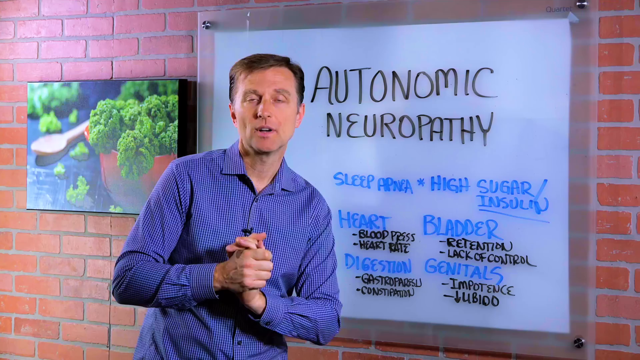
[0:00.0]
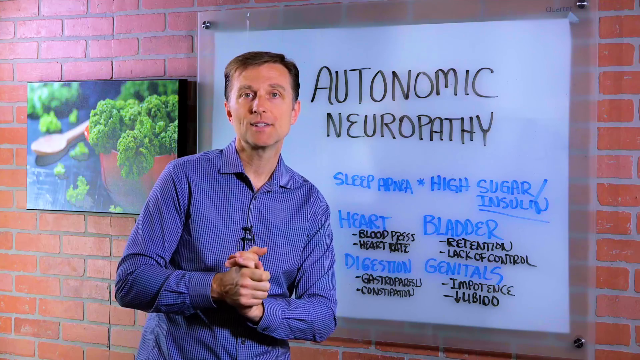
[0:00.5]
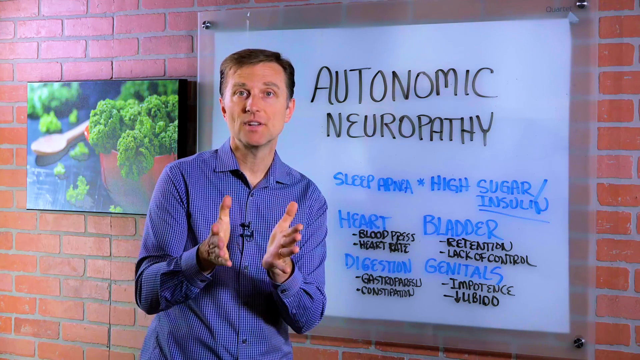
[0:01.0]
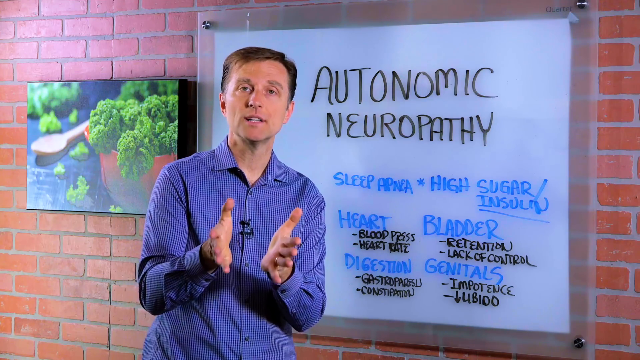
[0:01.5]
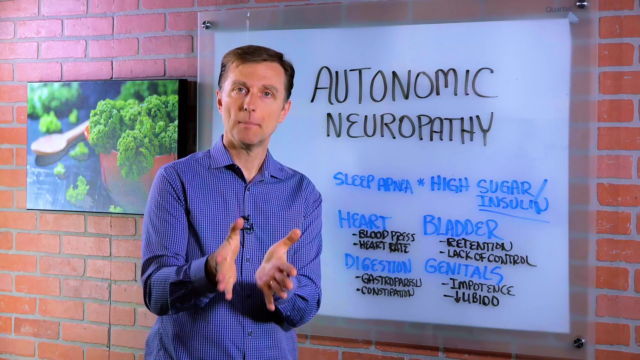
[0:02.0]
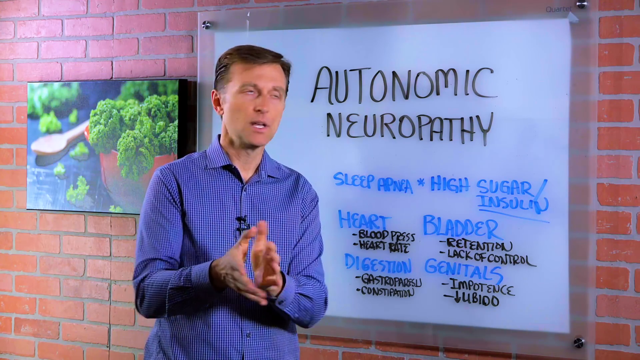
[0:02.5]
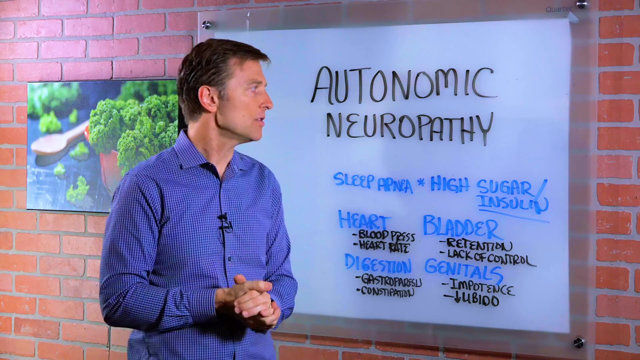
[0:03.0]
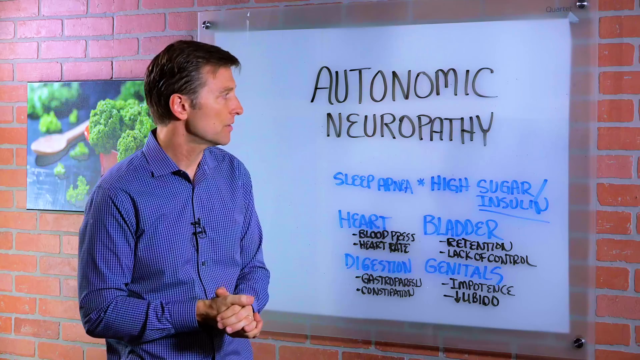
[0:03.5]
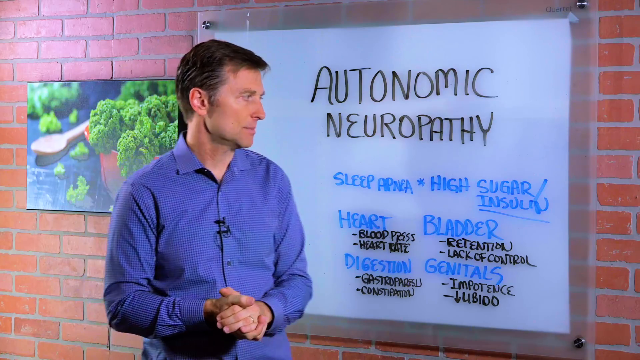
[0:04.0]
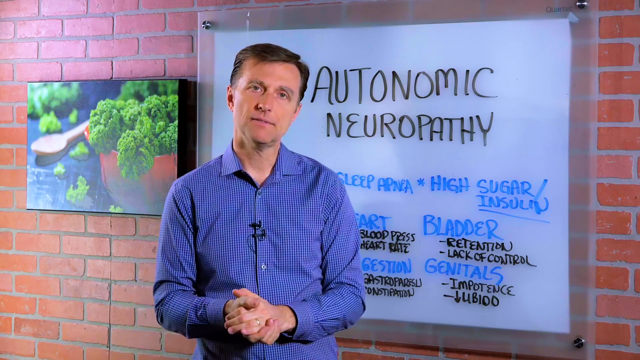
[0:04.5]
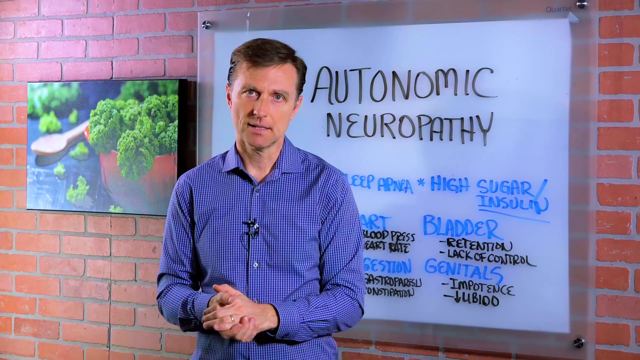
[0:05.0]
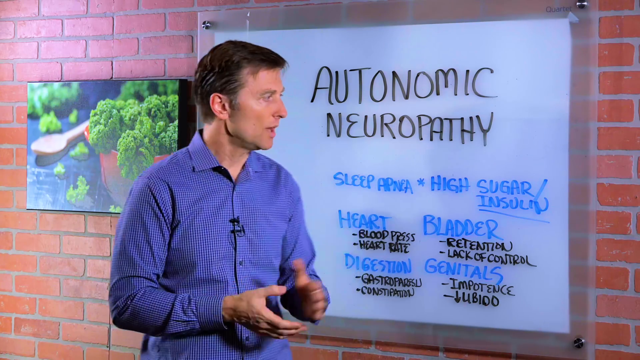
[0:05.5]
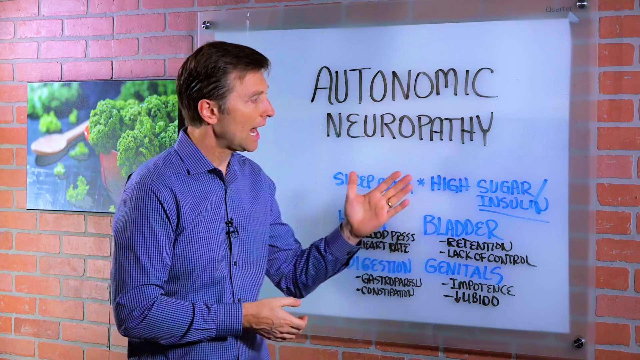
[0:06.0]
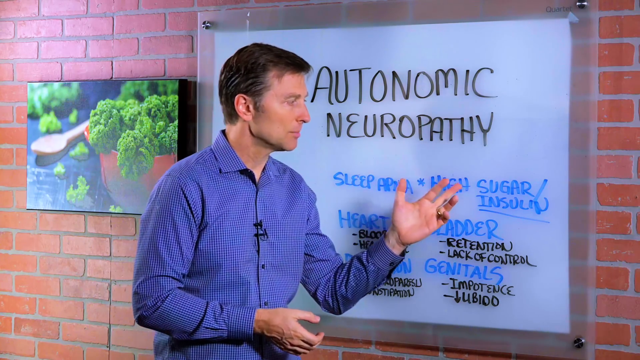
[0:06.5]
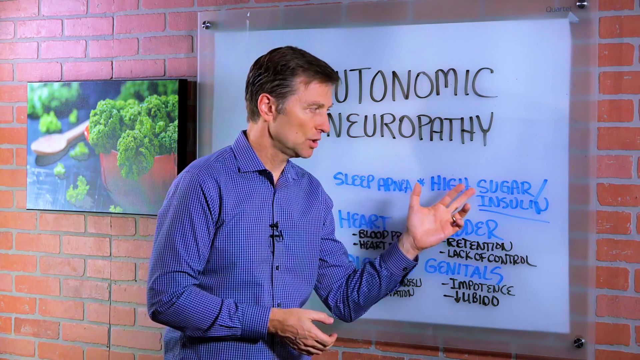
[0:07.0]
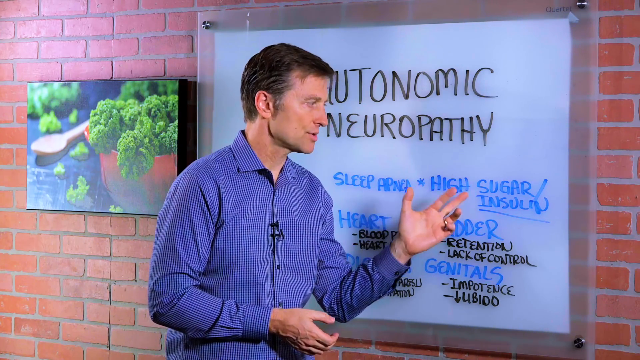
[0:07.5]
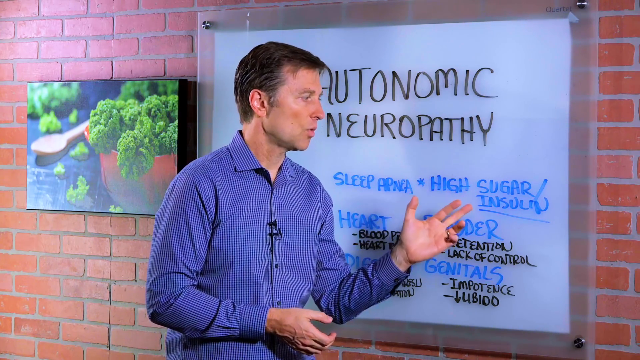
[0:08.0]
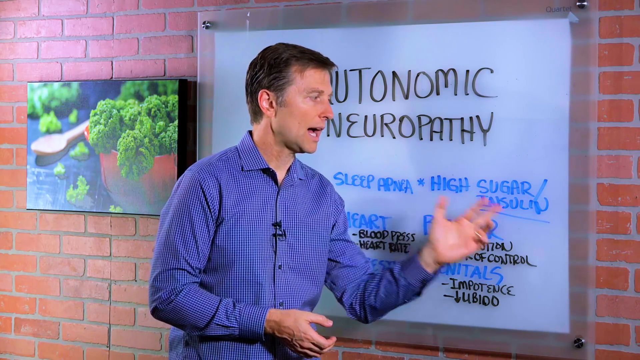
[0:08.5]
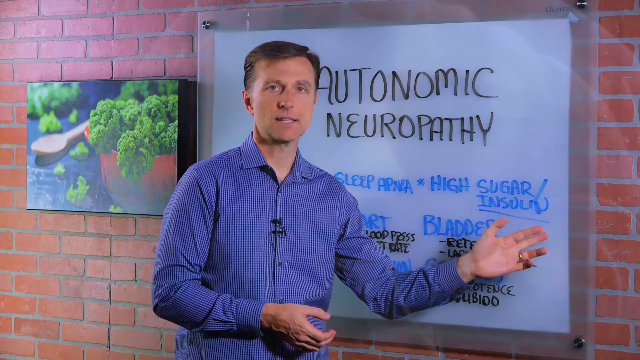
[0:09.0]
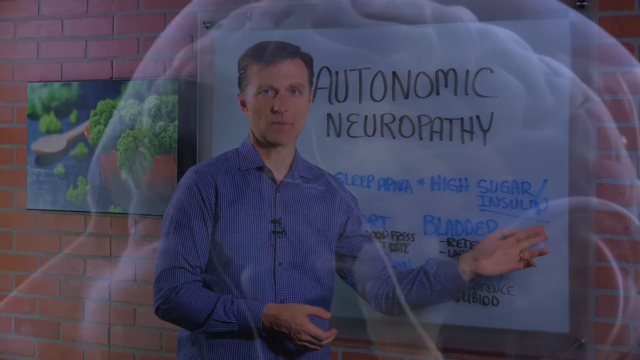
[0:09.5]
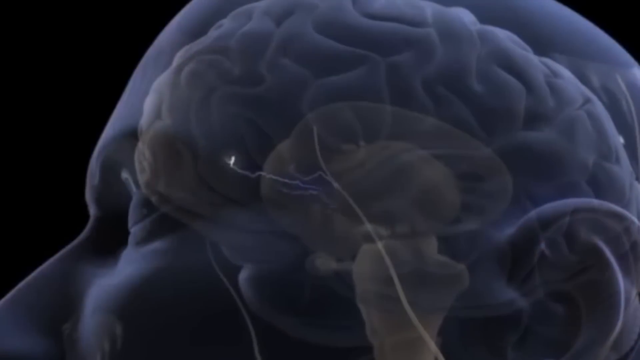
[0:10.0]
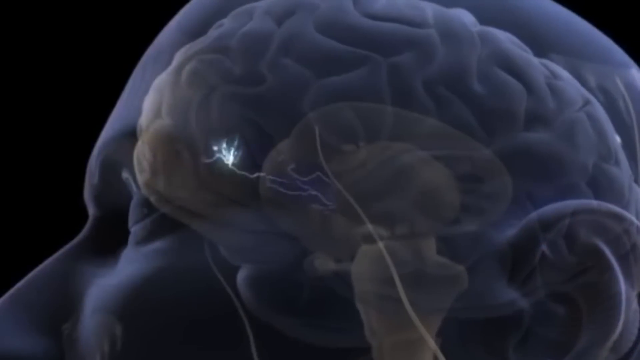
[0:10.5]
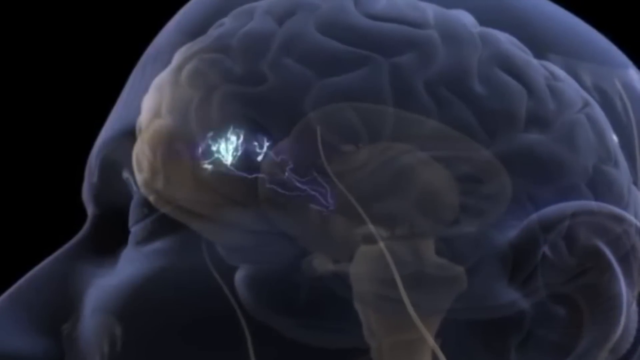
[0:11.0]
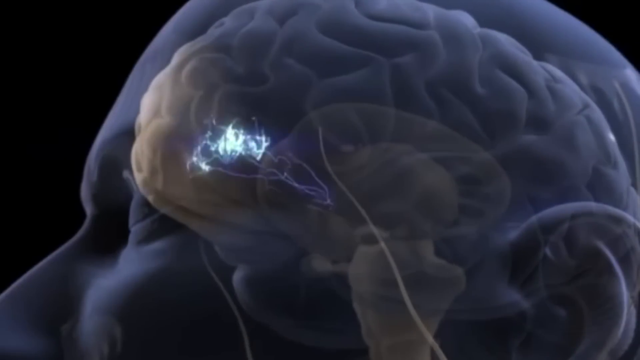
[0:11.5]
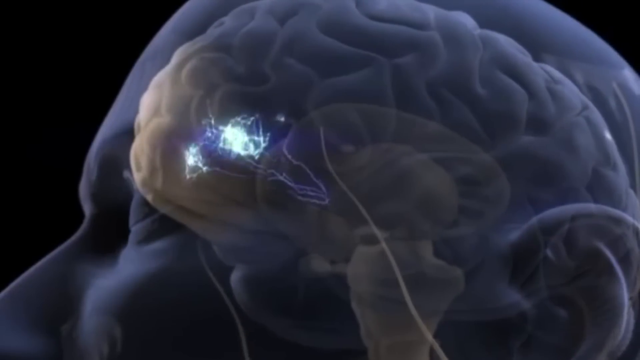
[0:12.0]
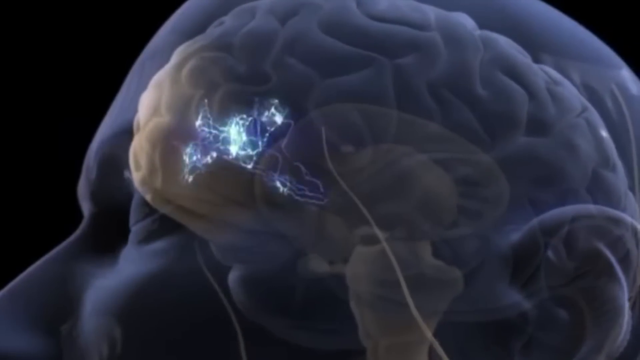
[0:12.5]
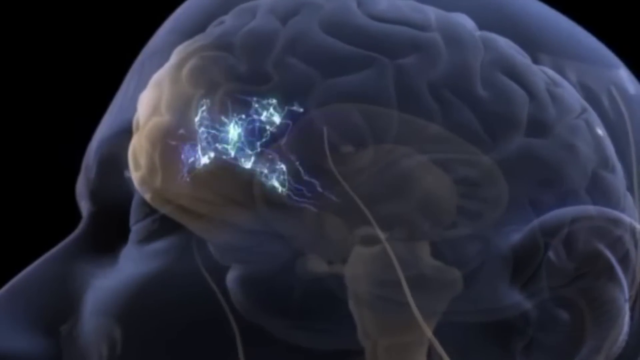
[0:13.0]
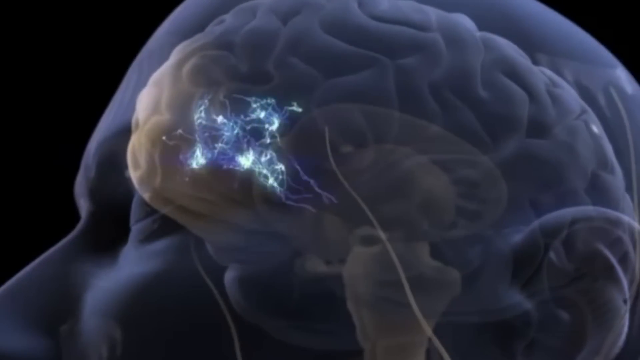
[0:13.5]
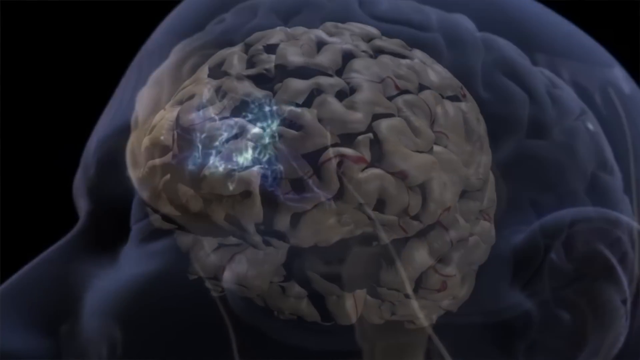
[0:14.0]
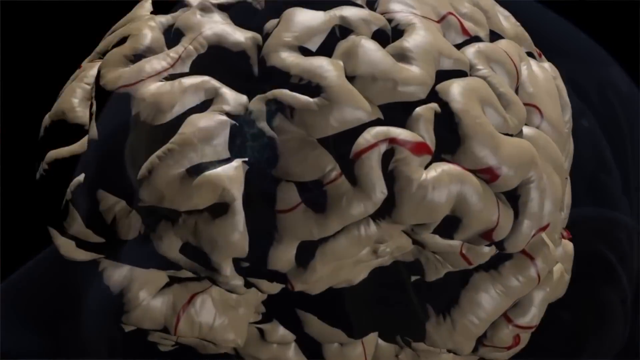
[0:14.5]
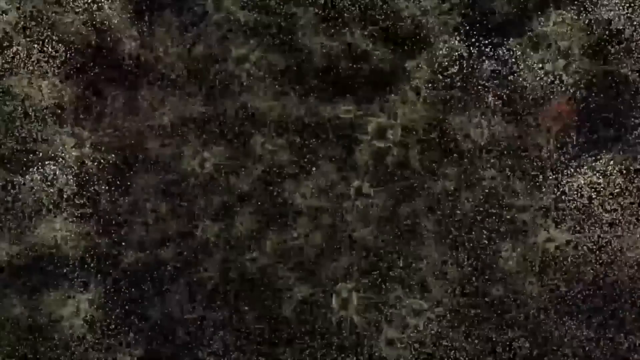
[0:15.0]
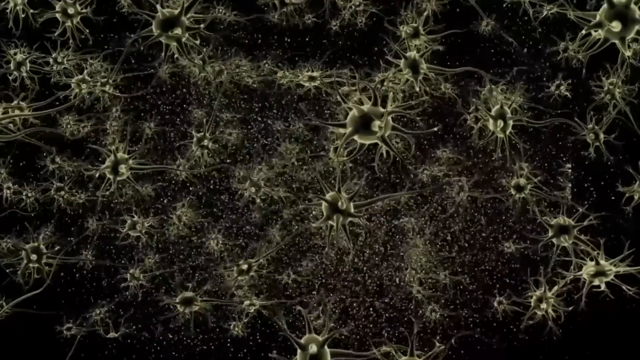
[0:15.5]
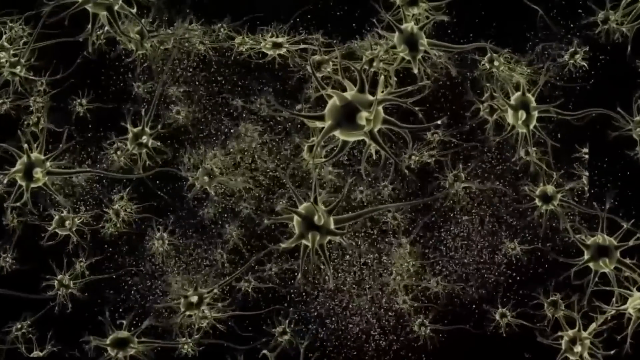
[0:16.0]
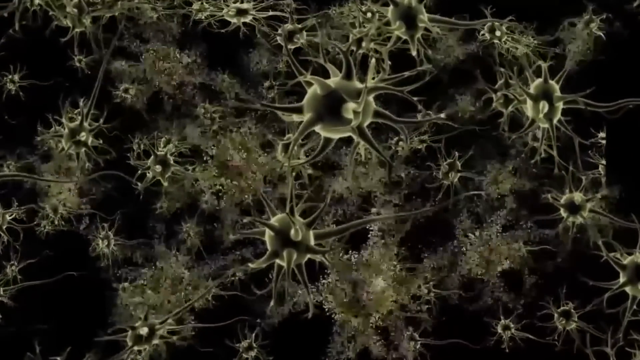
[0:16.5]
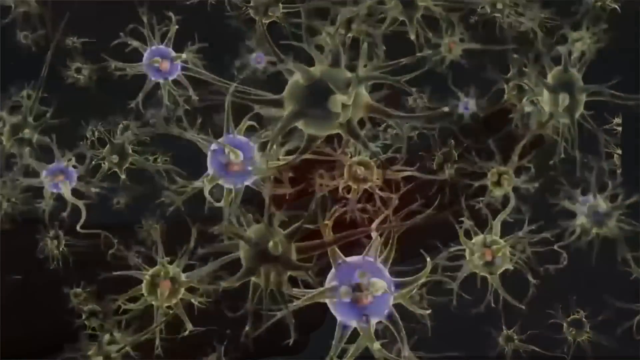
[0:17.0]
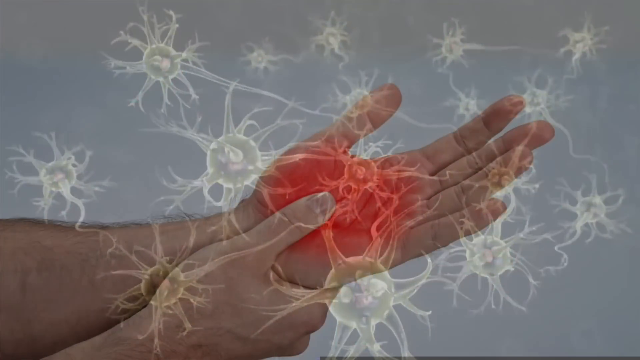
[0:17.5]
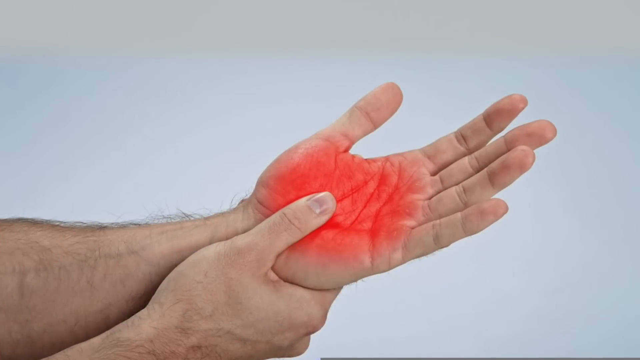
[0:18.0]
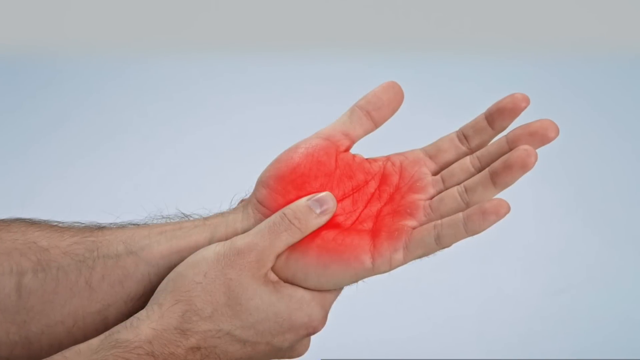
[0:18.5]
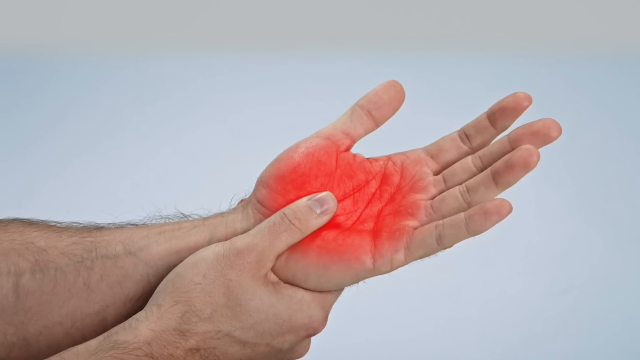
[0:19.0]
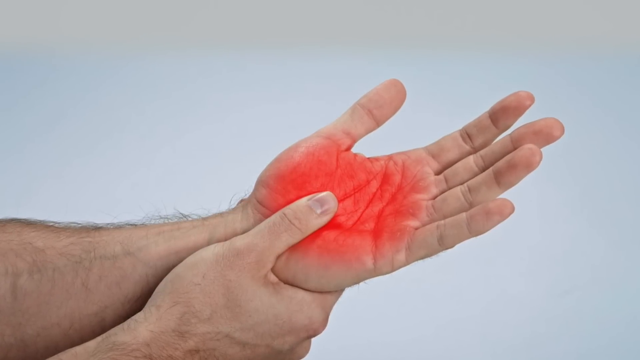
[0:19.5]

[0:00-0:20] Dr. Mandel stands in front of a brick wall. The bricks are brick red, with gray mortar joints that accent the overall appearance of the brickwork. To the left of the frame is a rectangular-shaped painting. A wooden spoon is sitting upright on top of a black countertop, and there is a burnt orange bowl filled with greens; greens are also scattered about the countertop. Directly behind Dr. Mandel is a whiteboard with words written on it. Dr. Mandel is talking about autonomic neuropathy. He has brown hair and wears a blue collared shirt with long sleeves. Both of his arms are bent at the elbow, his palms outstretched and facing each other. He speaks to his audience, gesturing with his hands to emphasize his words, moving both hands up and down, and then he clasps his left and right hands together, interlocking his fingers. He then looks to his left toward the whiteboard and points at it with his left hand and arm. His left arm is bent at the elbow and his palm faces the audience; his little finger is bent forward, his forefinger and middle finger are outstretched toward the whiteboard, and his thumb points up.